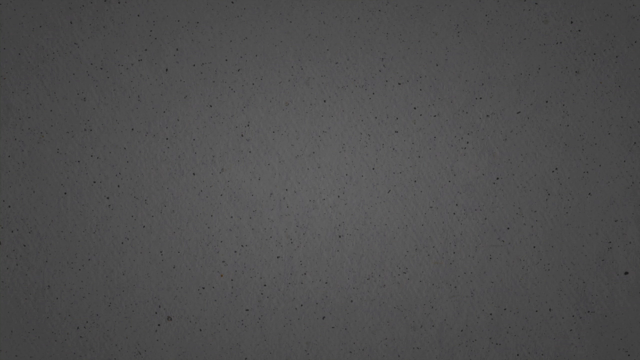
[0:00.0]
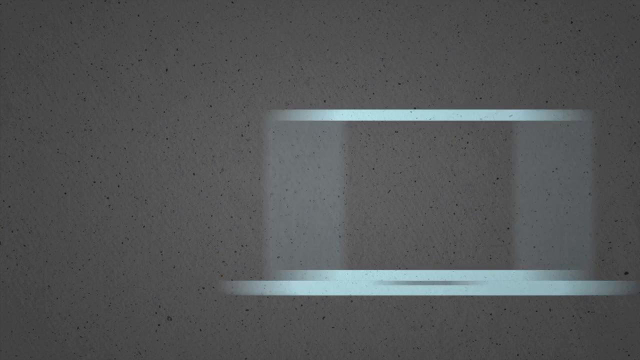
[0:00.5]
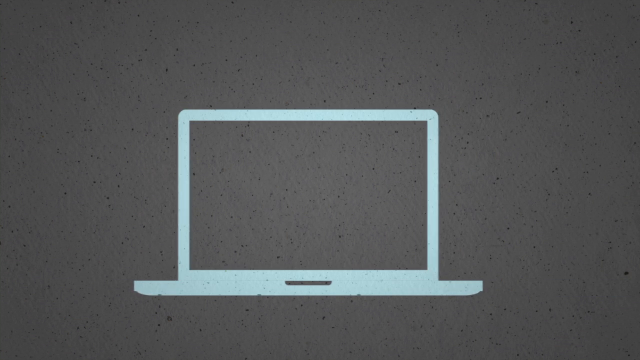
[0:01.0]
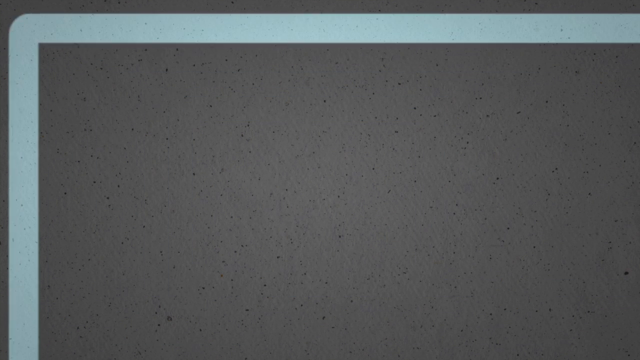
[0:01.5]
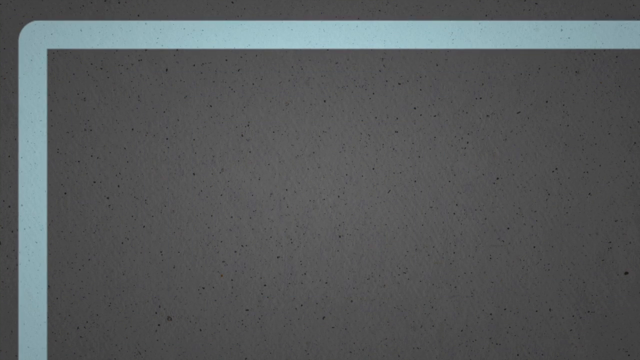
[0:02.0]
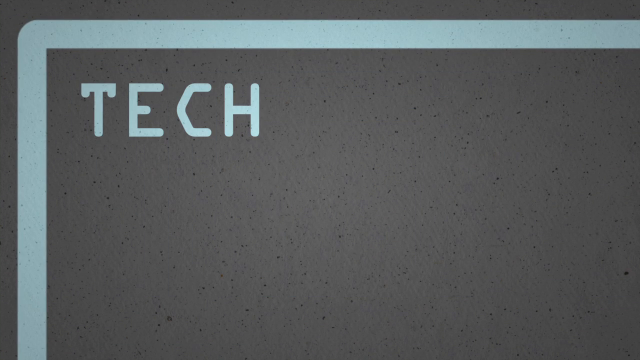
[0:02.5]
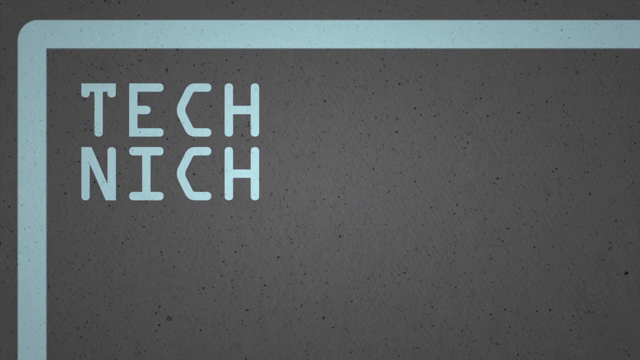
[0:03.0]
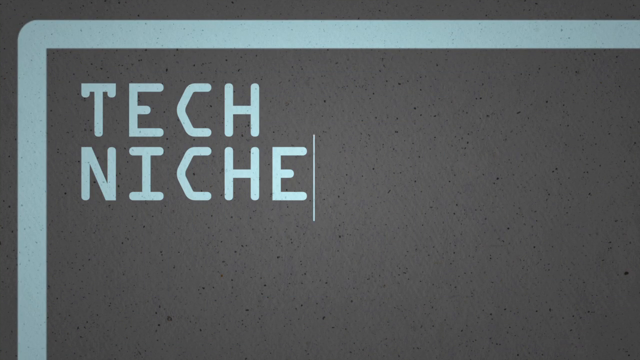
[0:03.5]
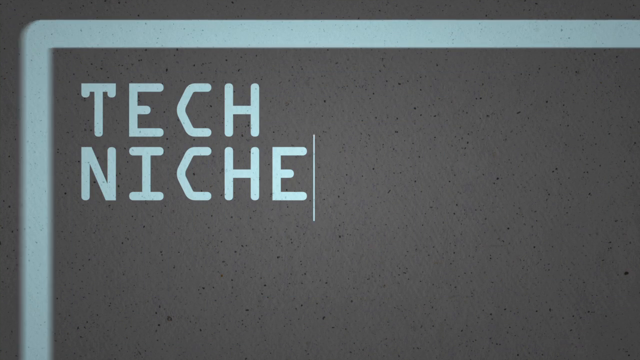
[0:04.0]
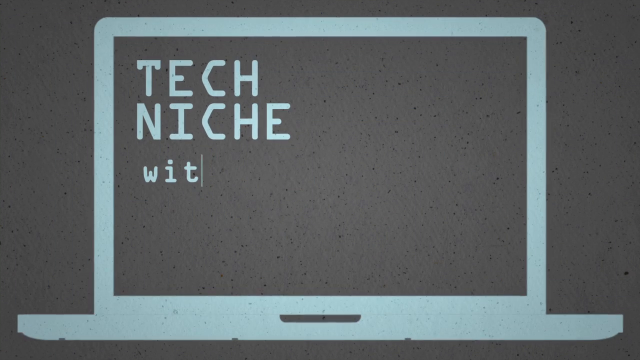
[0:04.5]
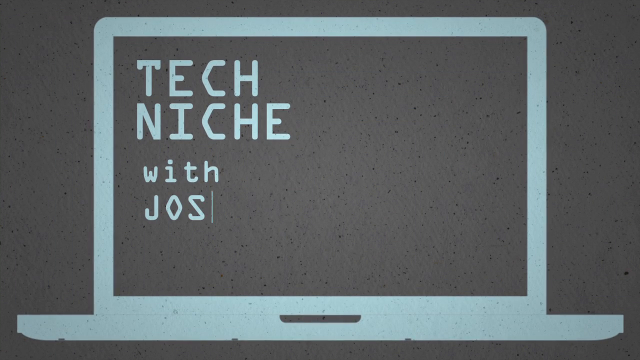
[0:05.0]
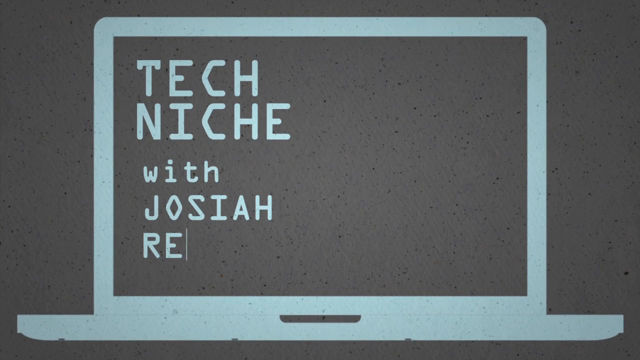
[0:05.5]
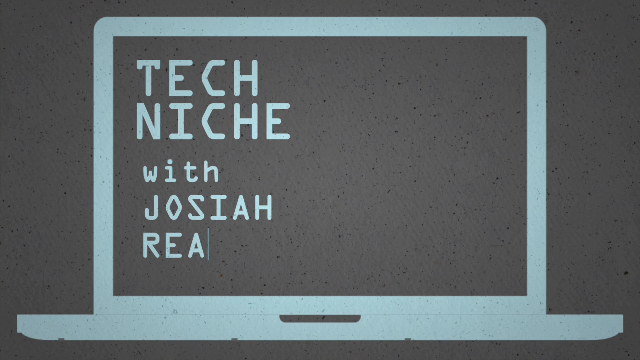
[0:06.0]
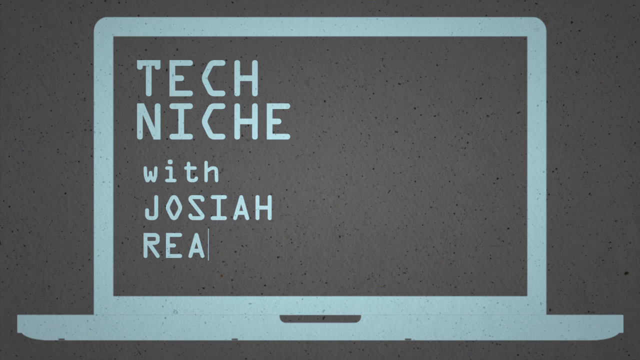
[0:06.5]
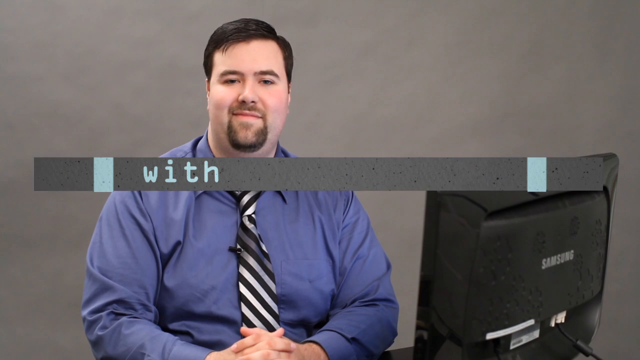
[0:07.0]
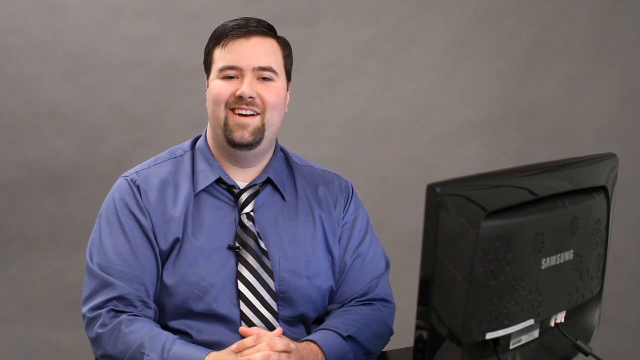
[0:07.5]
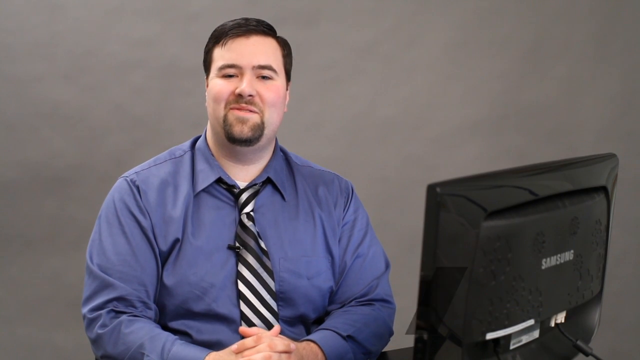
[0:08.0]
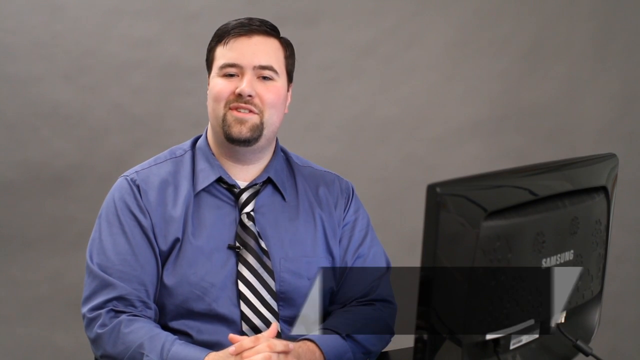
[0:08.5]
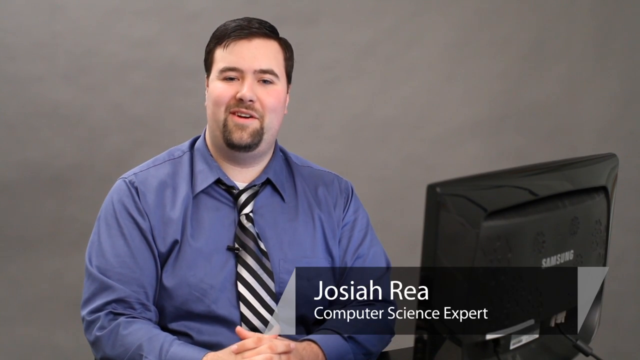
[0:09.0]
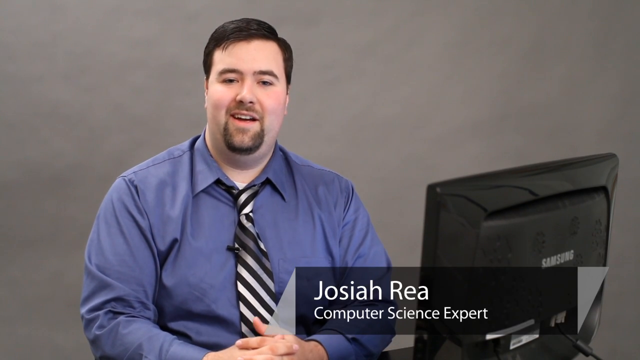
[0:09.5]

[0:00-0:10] The video opens with what is sort of a graphic of the outline of a laptop, and the intro reads "Tech Niche by Josiah Rea". It quickly transitions to a younger white man, probably in his late twenties to early thirties, wearing a blue dress shirt with a gray and black tie. He is slightly overweight, and his undershirt is barely visible peeking out from underneath his dress shirt. He has dark brown hair and a goatee, and he is sitting in front of a Samsung monitor. Then the video transitions.